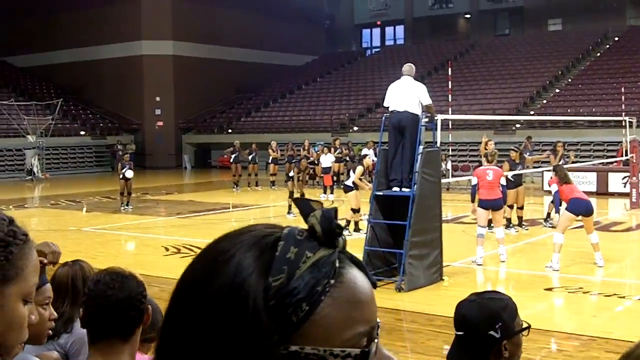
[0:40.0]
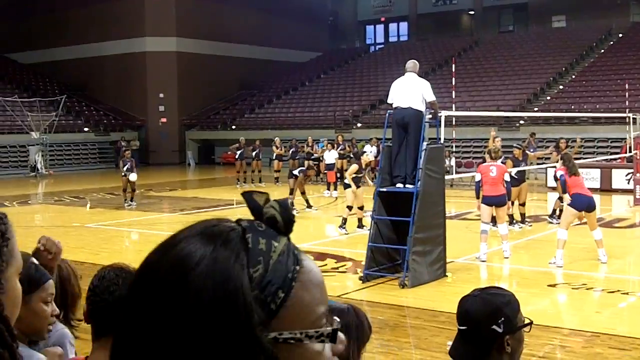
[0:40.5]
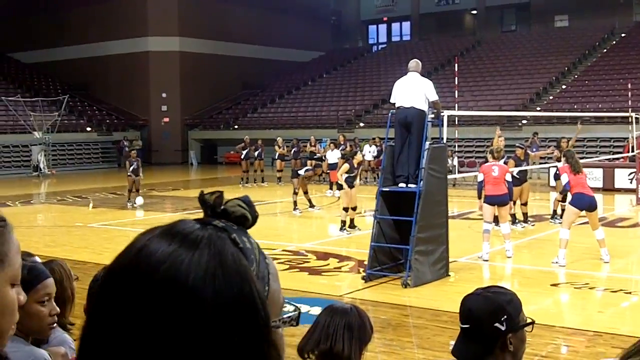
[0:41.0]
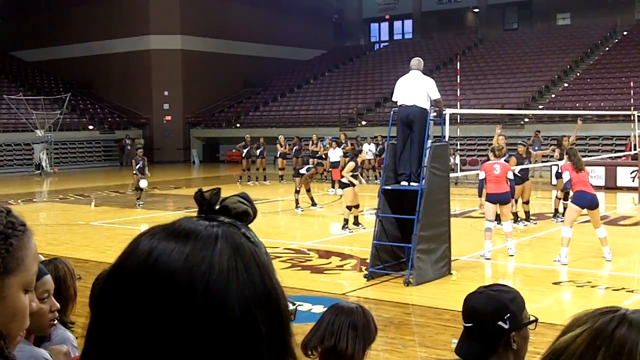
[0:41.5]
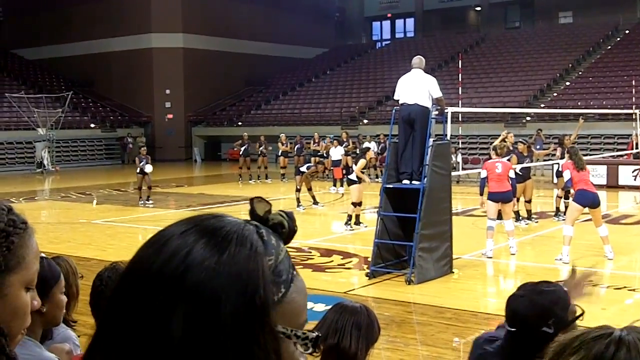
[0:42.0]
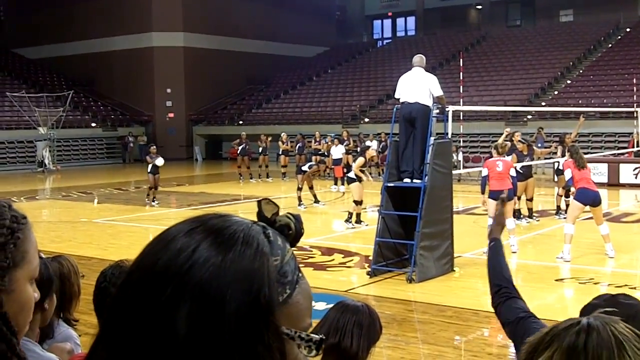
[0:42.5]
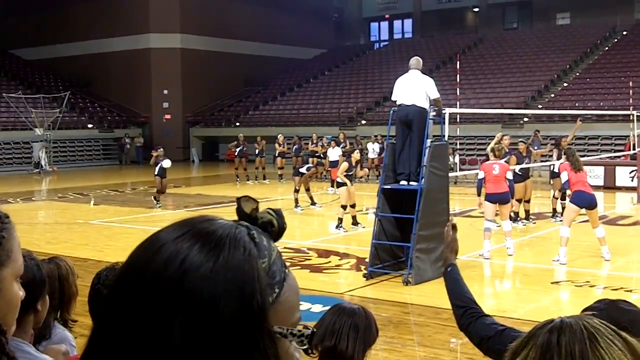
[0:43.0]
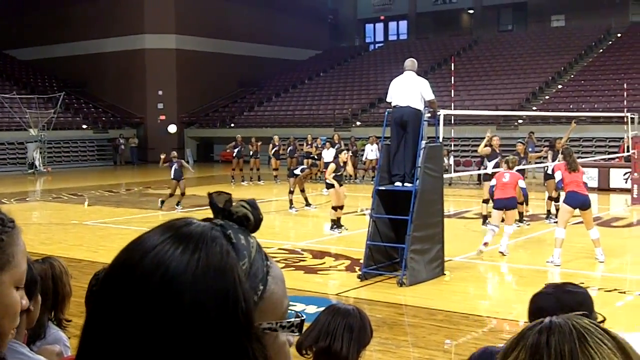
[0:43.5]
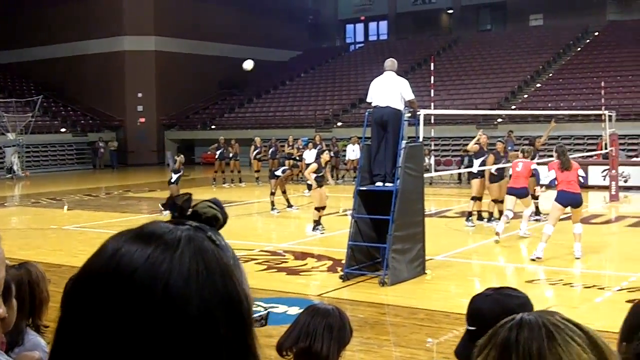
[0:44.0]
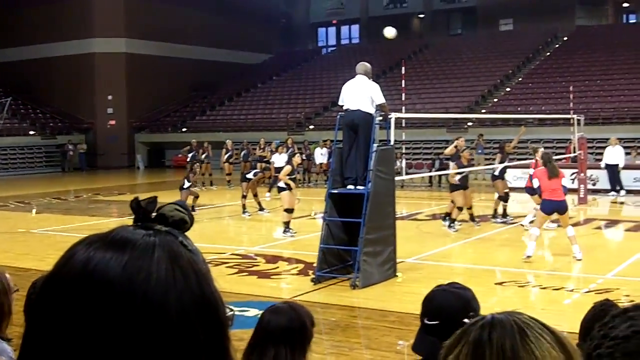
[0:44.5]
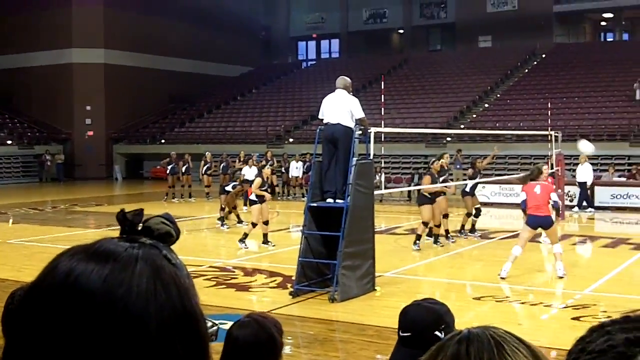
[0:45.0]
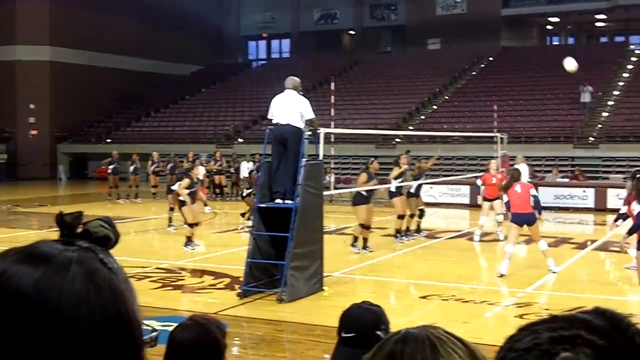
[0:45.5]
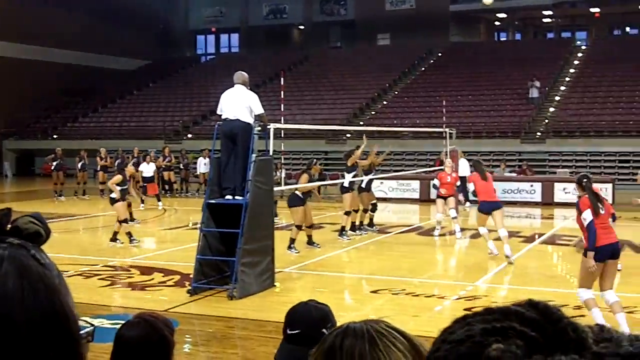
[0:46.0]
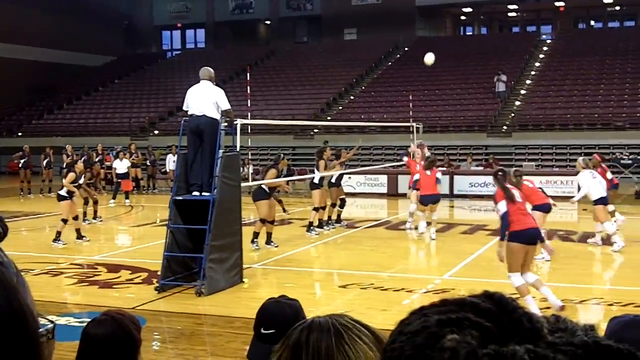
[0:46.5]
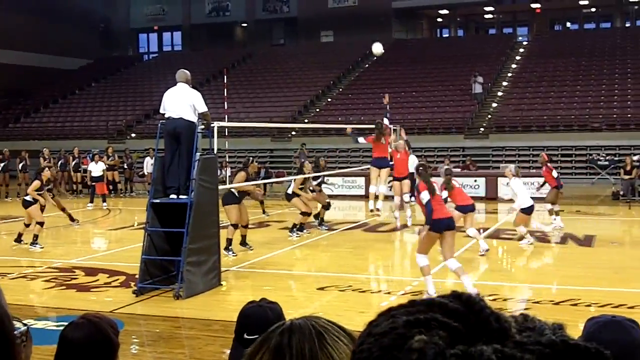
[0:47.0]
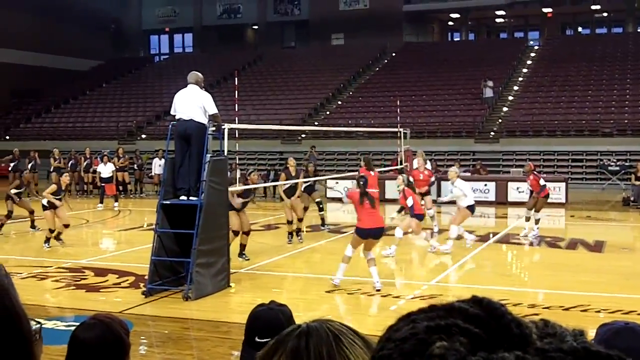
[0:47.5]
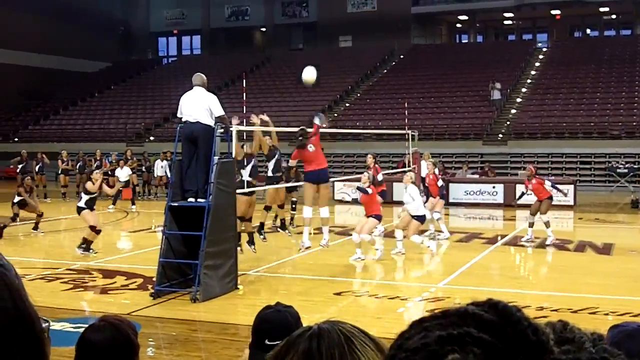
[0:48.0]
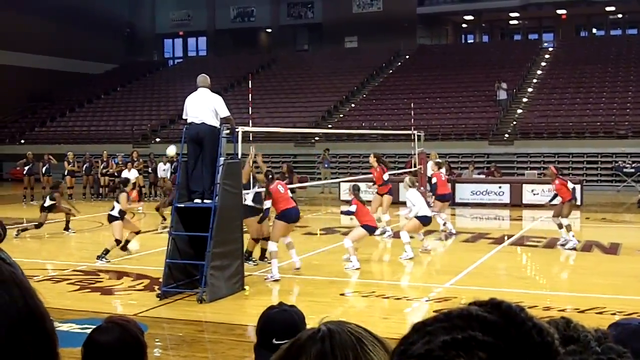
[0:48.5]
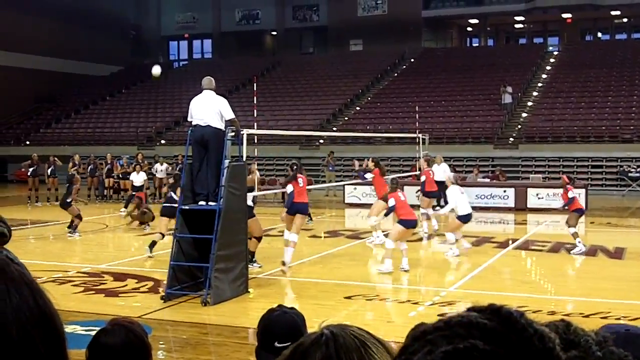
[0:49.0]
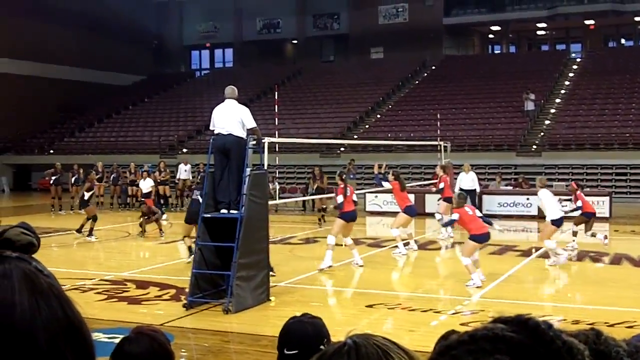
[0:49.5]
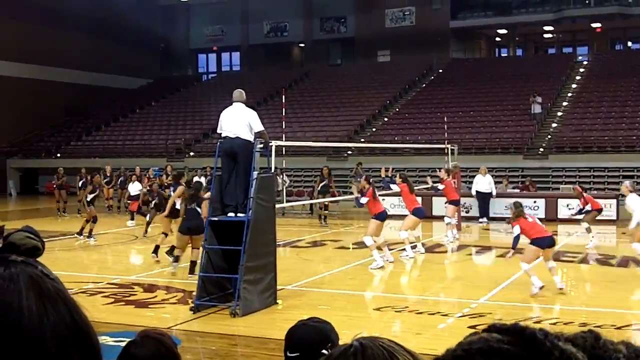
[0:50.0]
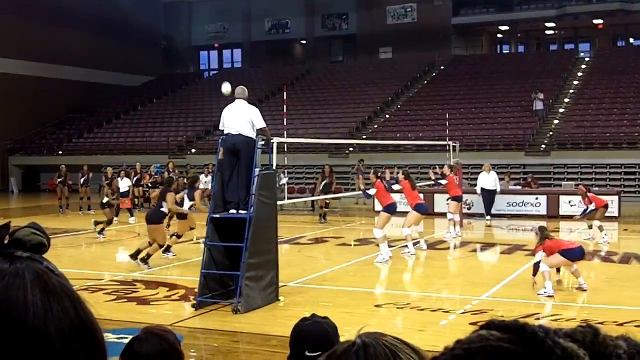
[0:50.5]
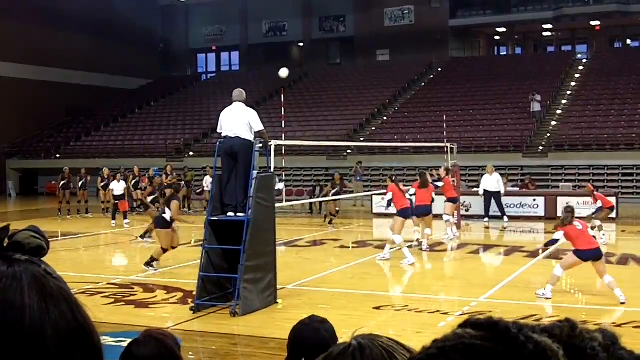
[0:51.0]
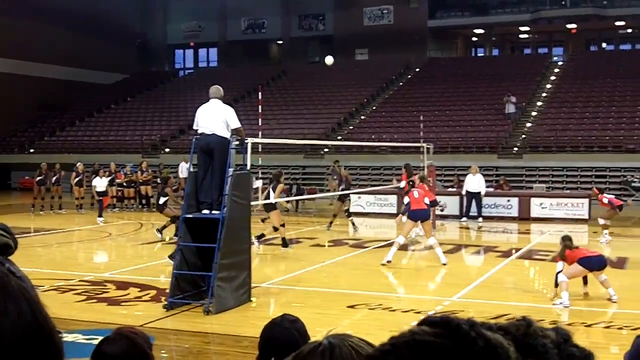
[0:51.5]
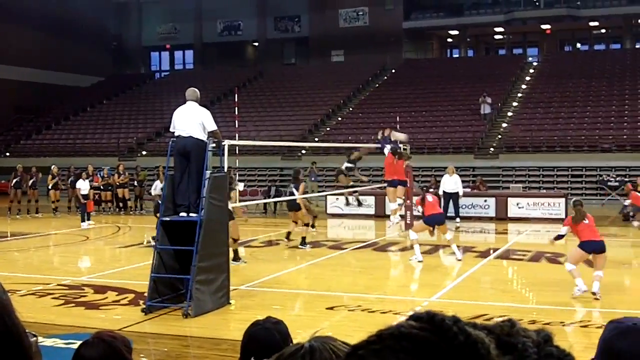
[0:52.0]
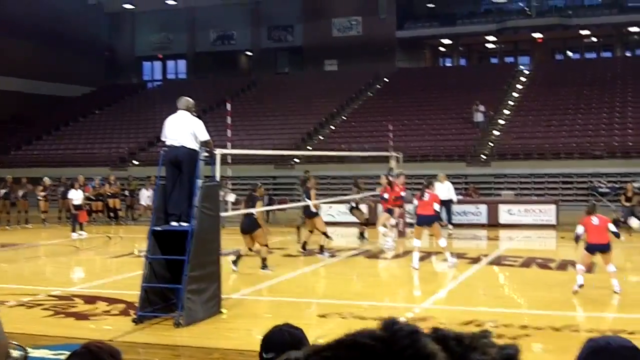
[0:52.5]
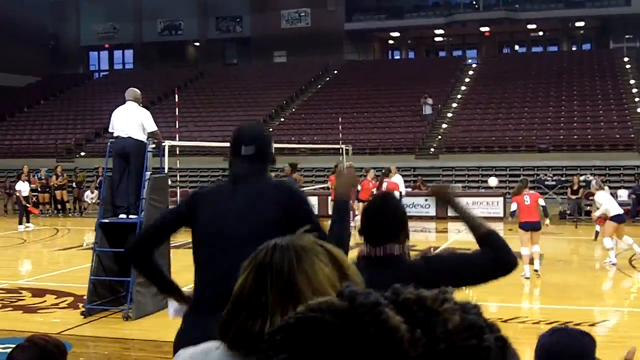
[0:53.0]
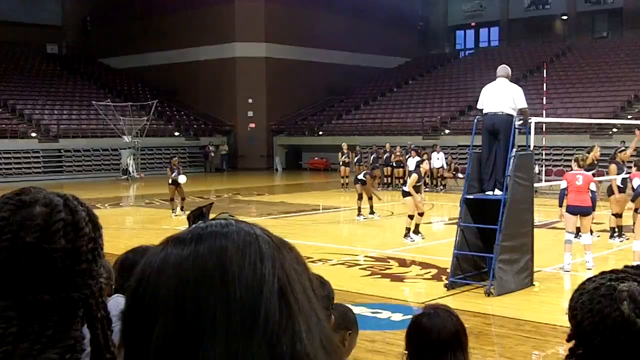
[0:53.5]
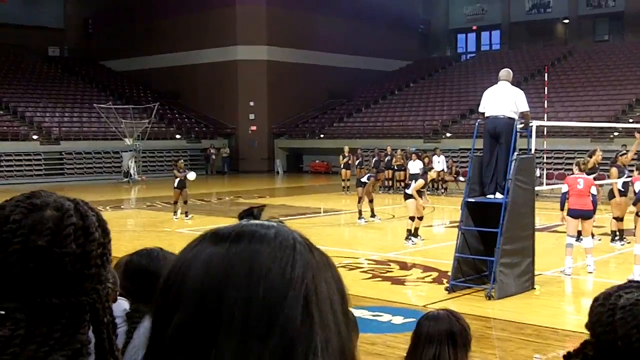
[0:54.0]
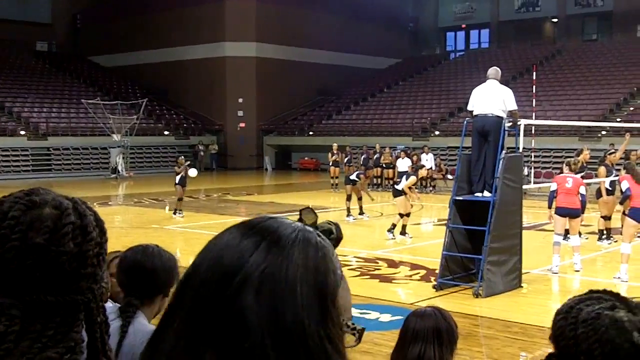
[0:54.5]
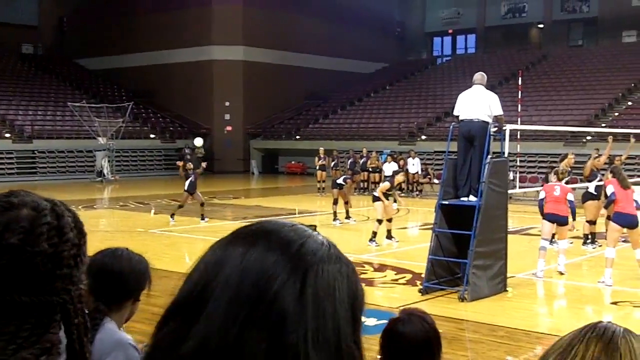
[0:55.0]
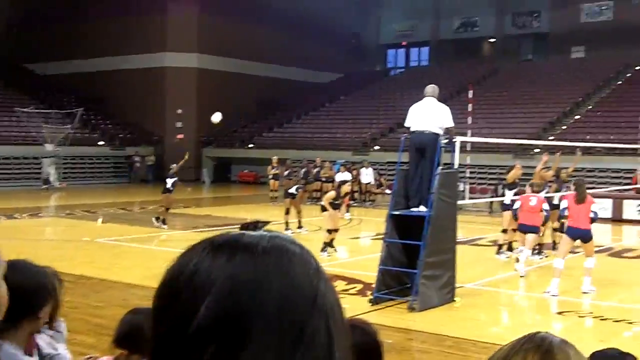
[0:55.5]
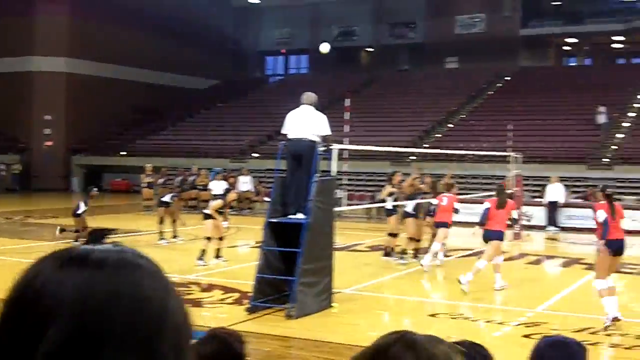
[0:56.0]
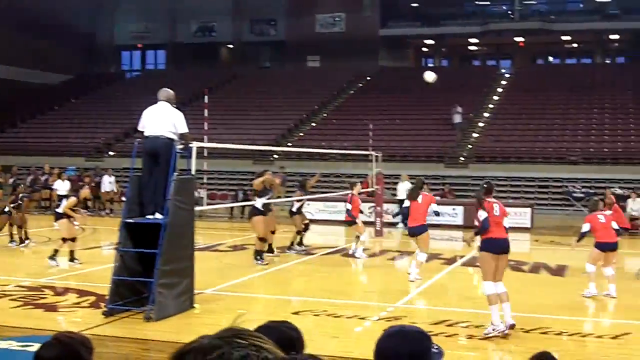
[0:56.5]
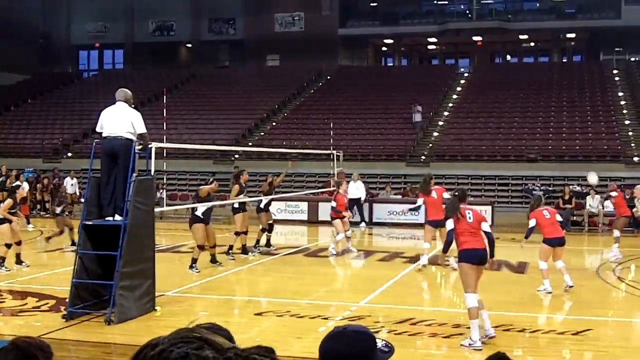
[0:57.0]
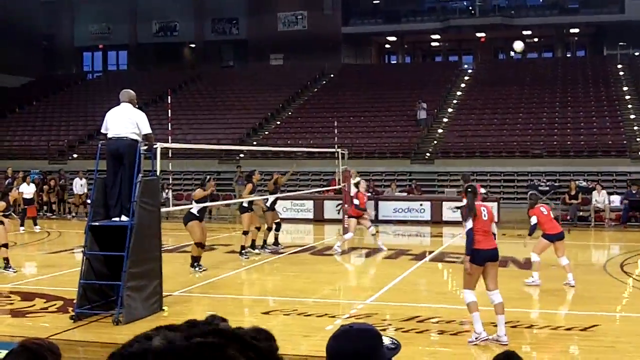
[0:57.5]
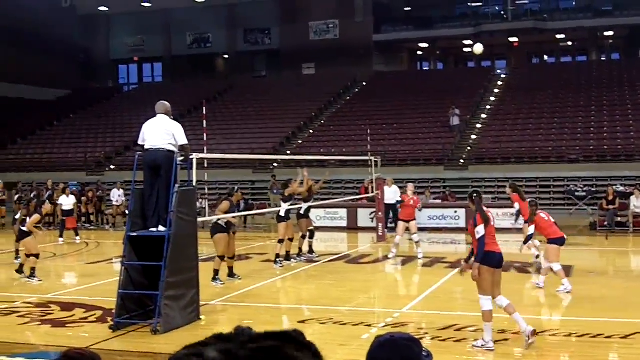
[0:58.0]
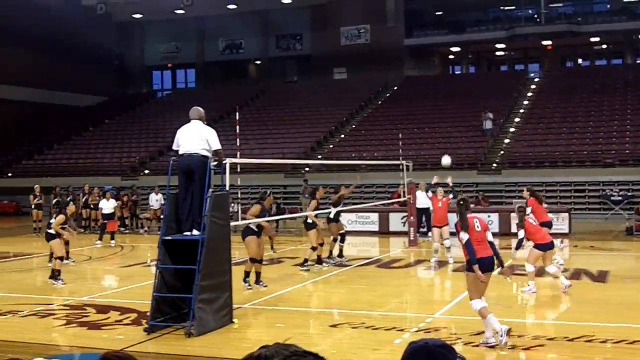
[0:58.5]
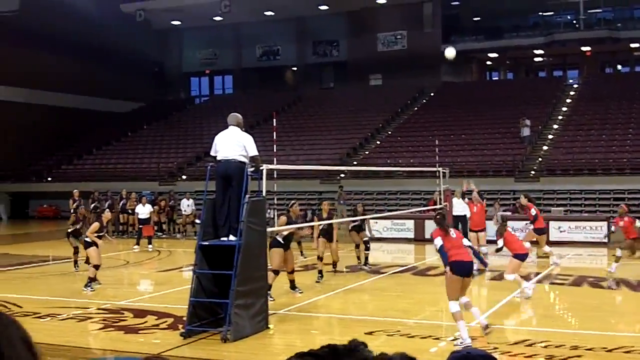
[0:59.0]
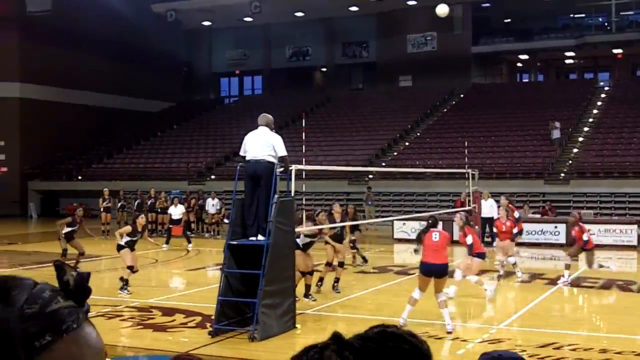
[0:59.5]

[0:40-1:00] A college-level girls' volleyball game is played between a red-jersey team and a black-jersey team, with the black team doing very well and scoring repeatedly. Audience members sit in seats near the camera, and only the tops of their heads are visible; when the black team scores, spectators jump up from their seats, kind of go onto the floor a bit, and cheer. The referee, in black pants and a white shirt, stands on stairs leading to a little podium, holding on to a railing and calling the plays as they happen. Team members who aren't playing watch from the sideline. The judges are in between at a desk with advertisement banners in front of it. The rest of the stadium is empty, with all empty seats on the opposite side across from the audience. The floor is very shiny and has writing on it that is very hard to read. Which team is the home team is unclear.